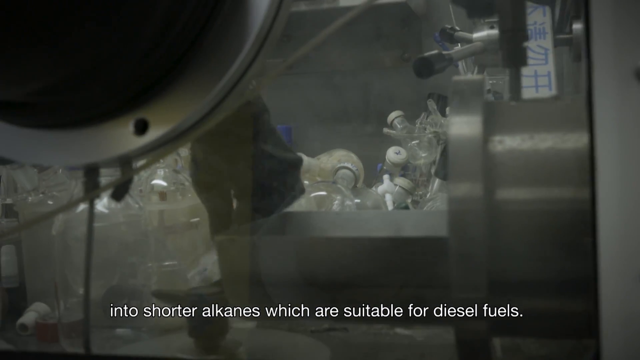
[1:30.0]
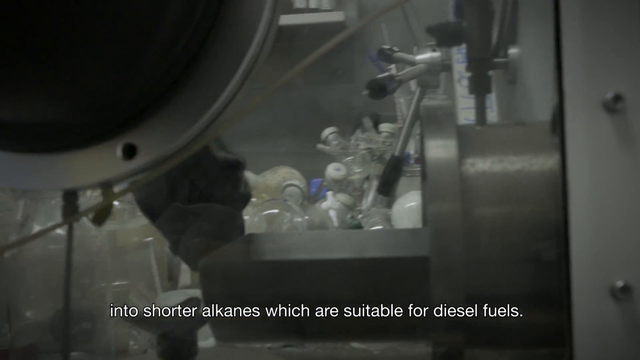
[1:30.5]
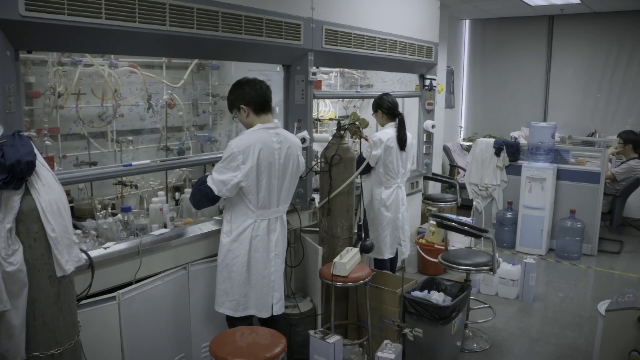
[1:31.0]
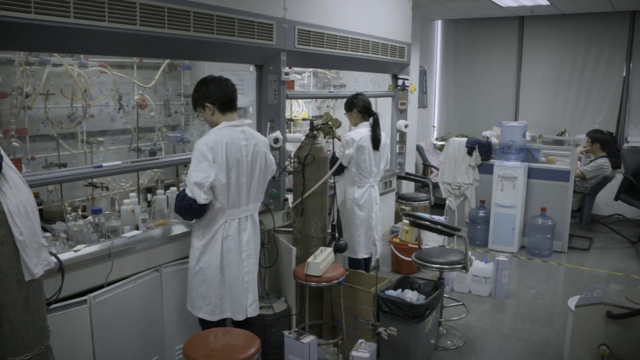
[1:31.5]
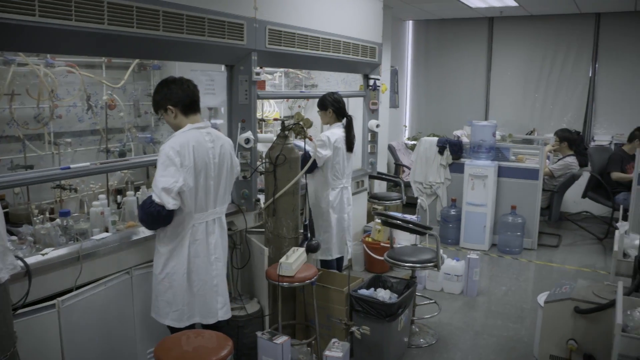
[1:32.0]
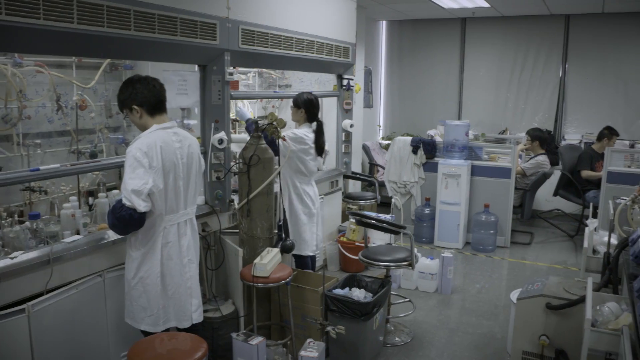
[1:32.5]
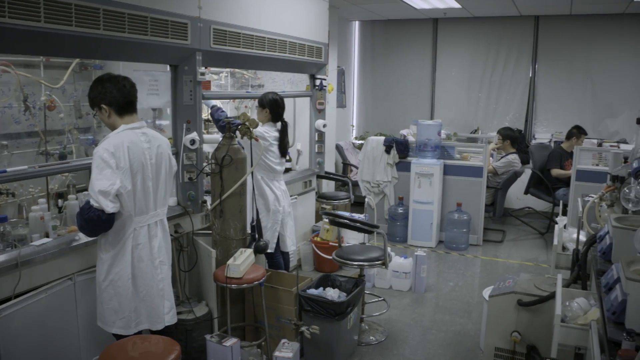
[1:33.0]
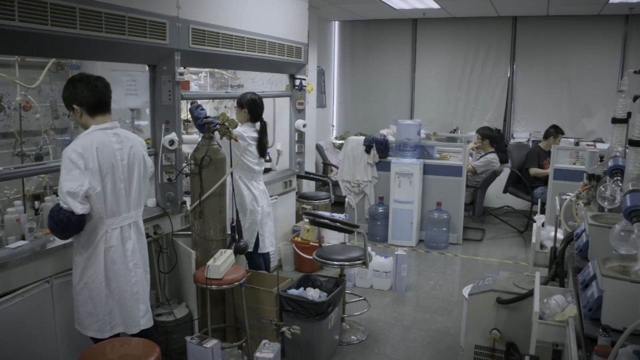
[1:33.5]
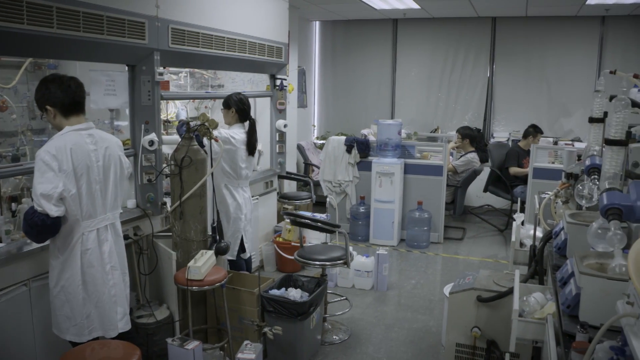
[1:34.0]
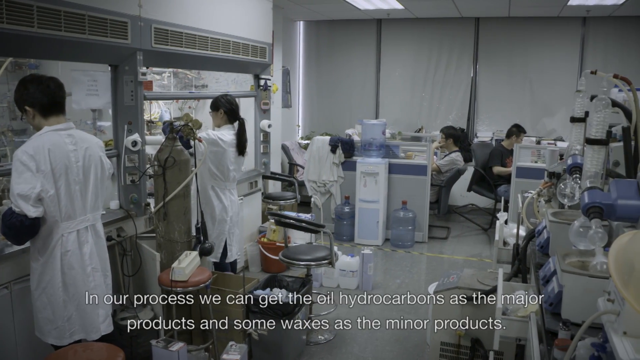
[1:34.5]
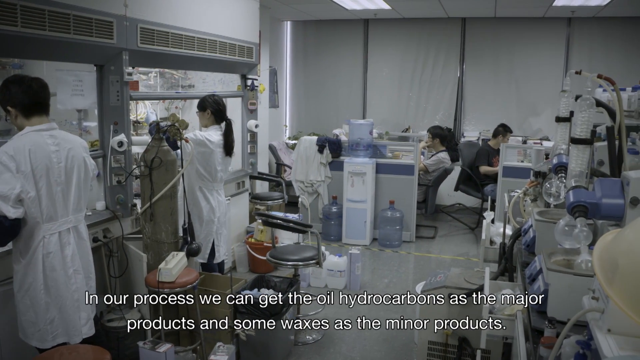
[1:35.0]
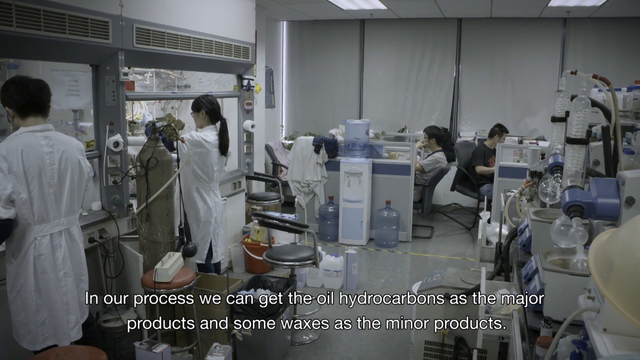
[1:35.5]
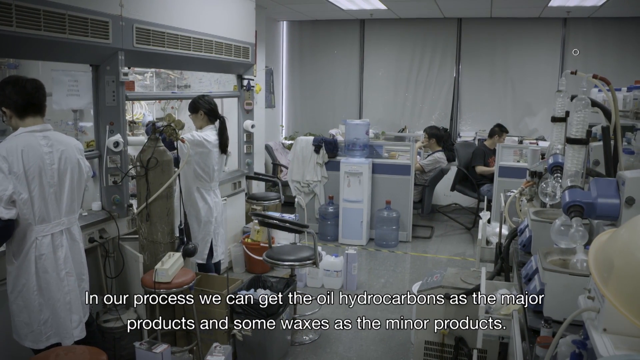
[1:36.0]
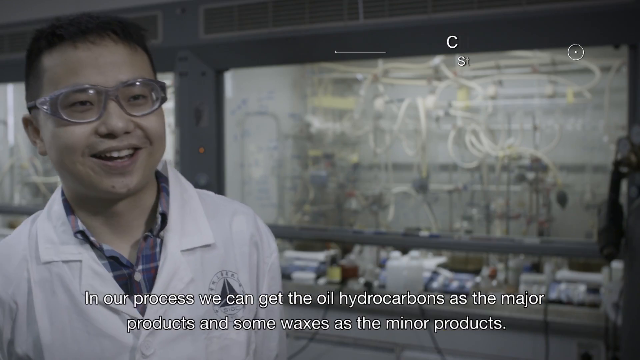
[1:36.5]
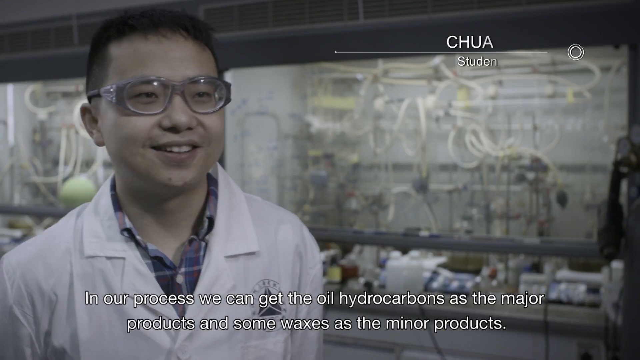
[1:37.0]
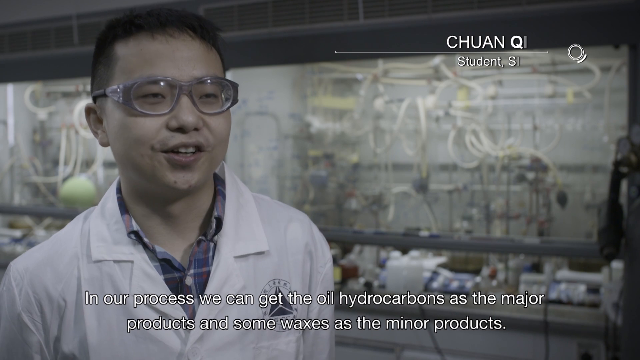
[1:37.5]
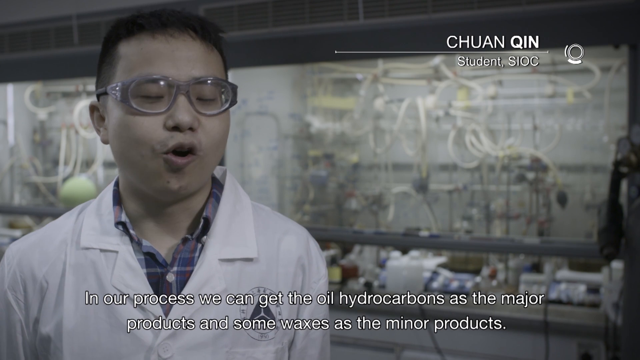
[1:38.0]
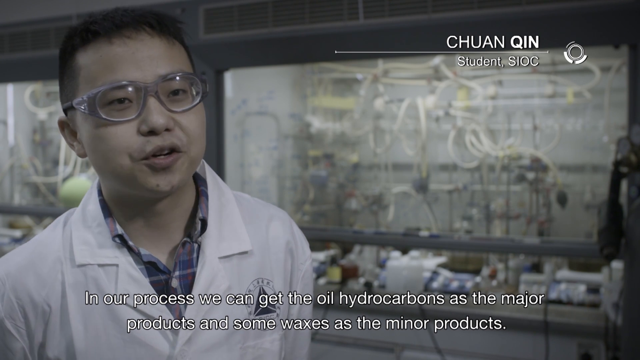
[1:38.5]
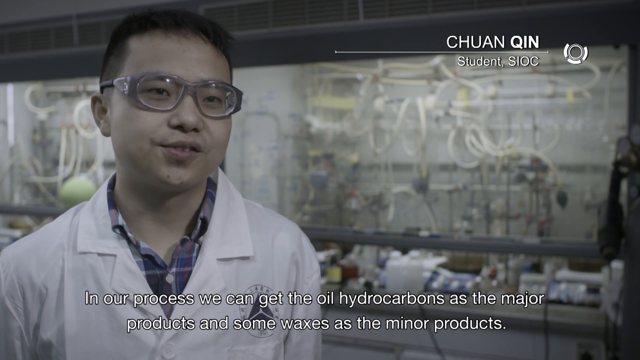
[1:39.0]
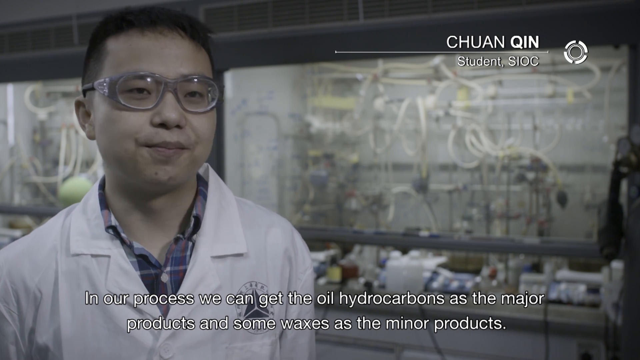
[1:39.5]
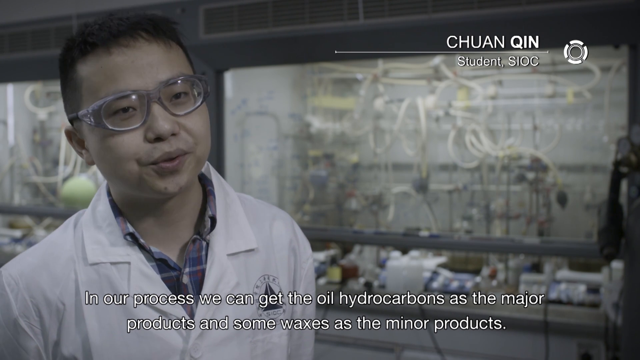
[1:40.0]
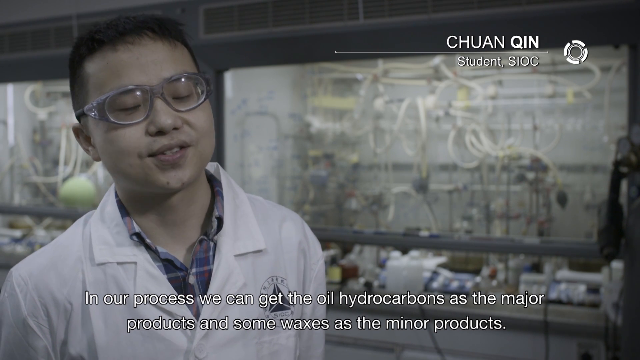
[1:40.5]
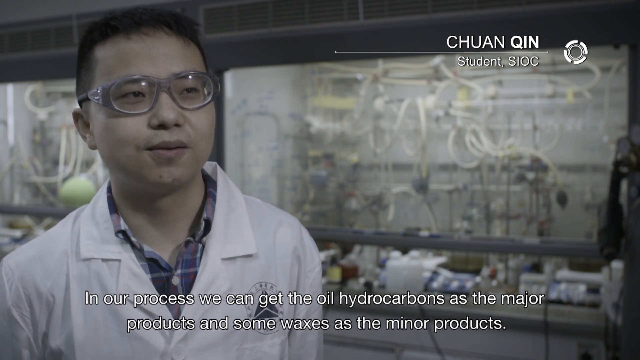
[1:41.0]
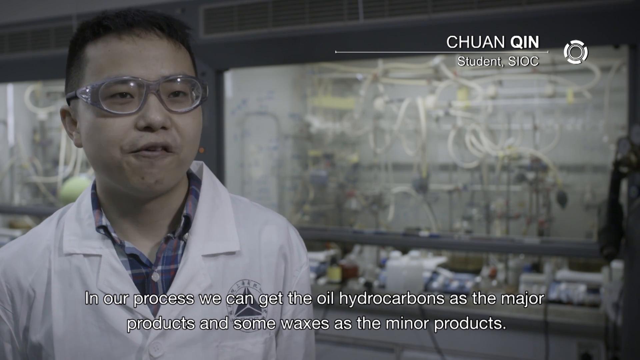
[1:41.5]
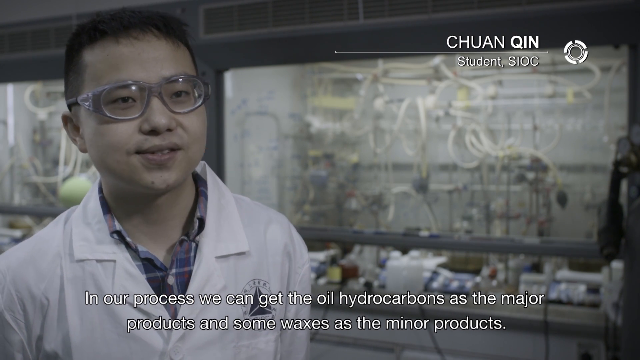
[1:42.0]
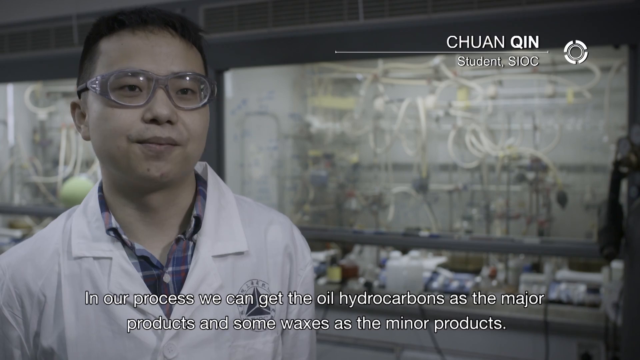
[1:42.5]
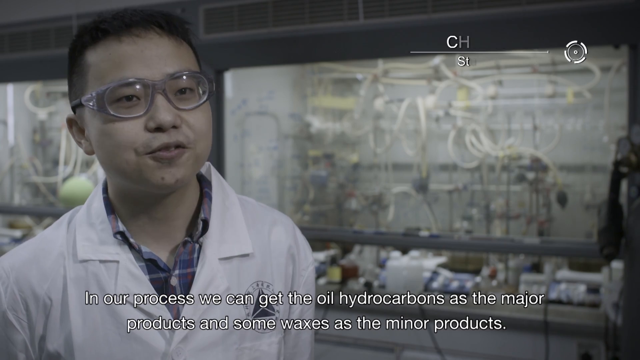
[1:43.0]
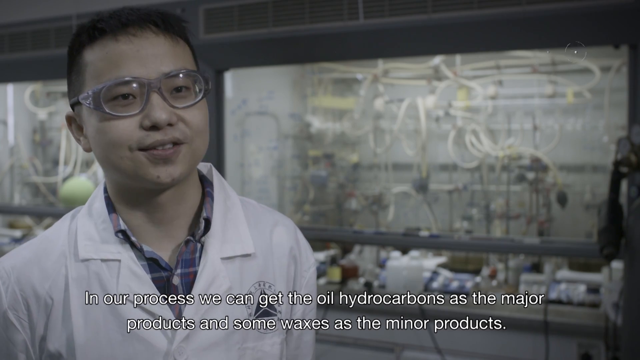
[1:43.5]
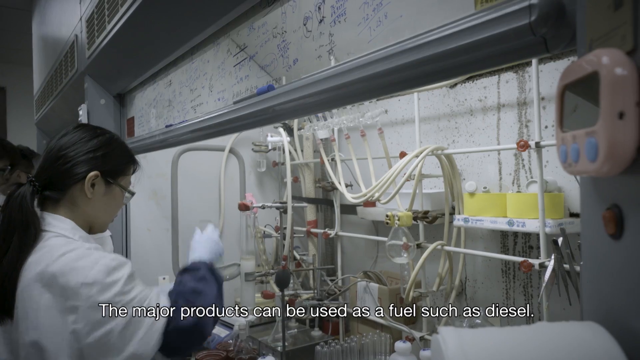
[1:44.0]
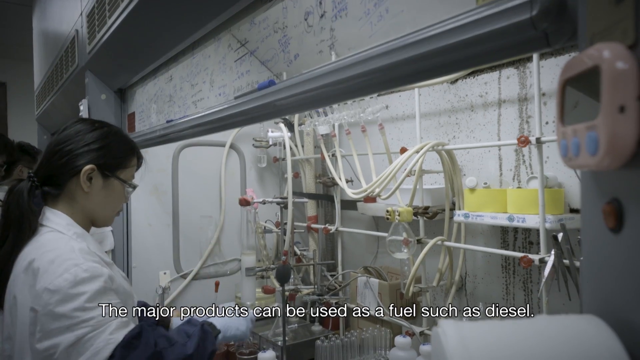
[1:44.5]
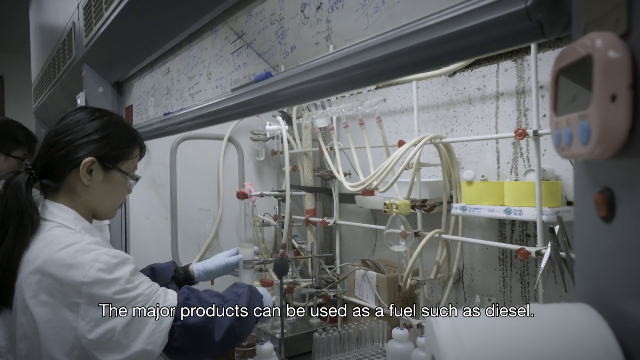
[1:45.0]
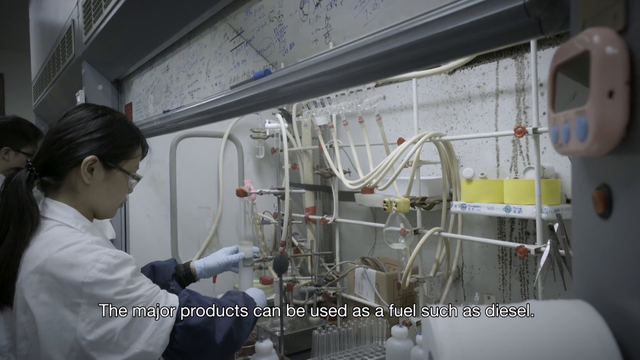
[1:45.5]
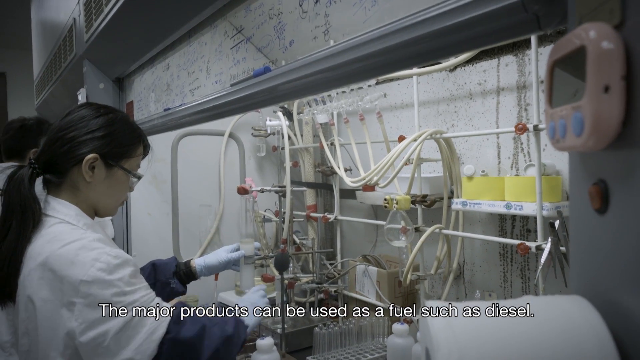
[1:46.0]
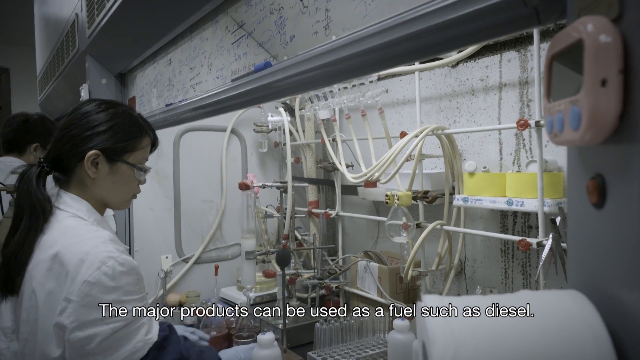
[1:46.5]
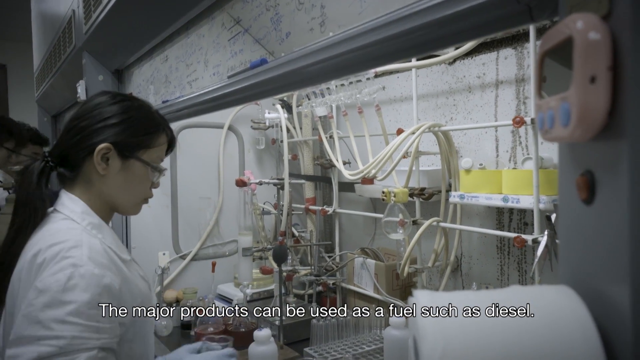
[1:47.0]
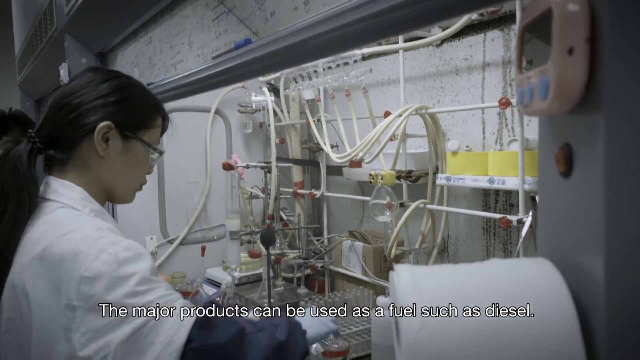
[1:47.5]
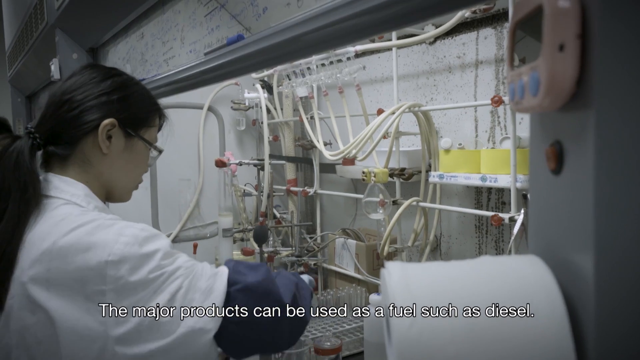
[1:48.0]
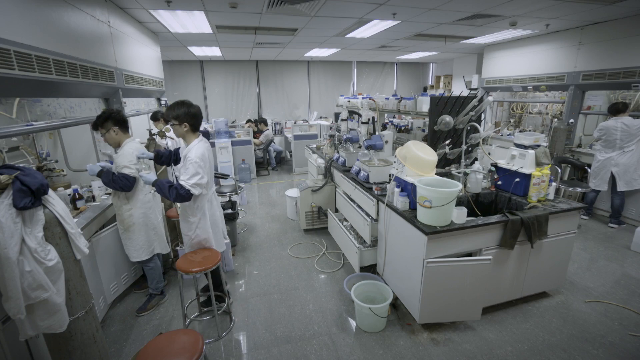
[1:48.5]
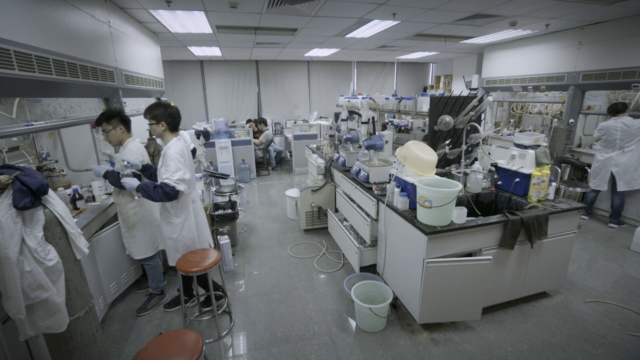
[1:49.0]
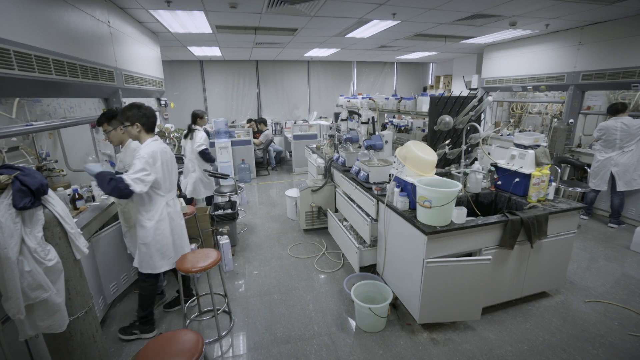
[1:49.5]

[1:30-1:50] A large room looks like both a science lab and an office. On the left side are kind of workstations with lots of different machines, bottles and tubes all around, where two young scientists, a male and a female, stand working. At the back of the room are a few desks where a few people are working. A close-up then shows a male scientist wearing a white lab coat over a blue and dark red flannel button-down shirt, with safety glasses on, shown from his chest to the top of his head as he speaks to the camera. Text at the top right of the screen reads "Chuan Qin," with "student, SIOC" underneath. Another shot shows a young woman scientist working at the workstation; she seems to have just placed some type of tube containing a cloudy white liquid onto a holder on the desk.